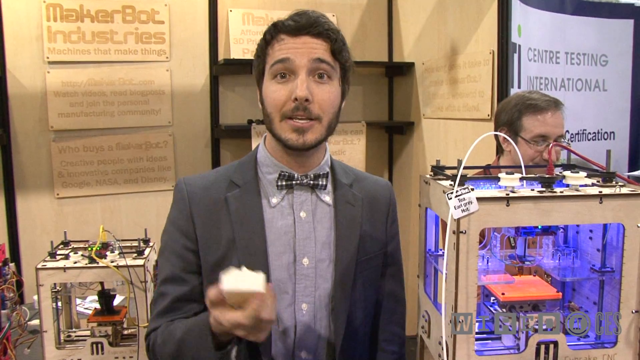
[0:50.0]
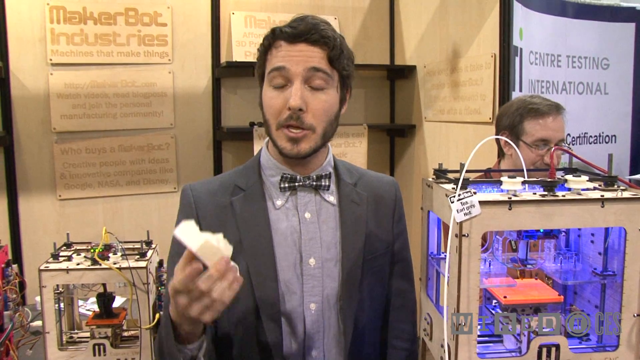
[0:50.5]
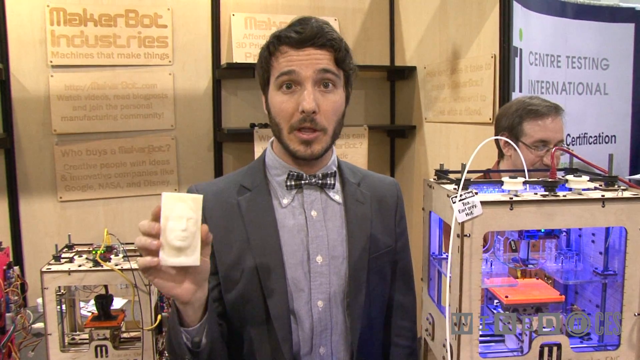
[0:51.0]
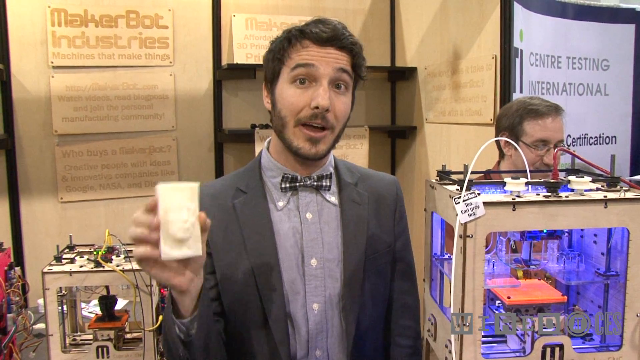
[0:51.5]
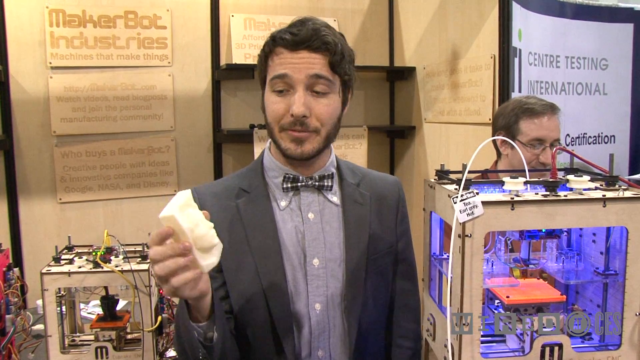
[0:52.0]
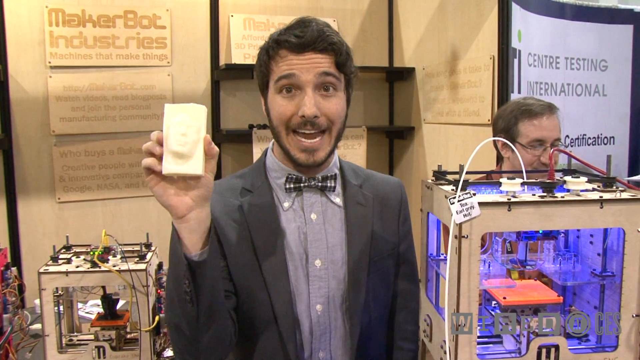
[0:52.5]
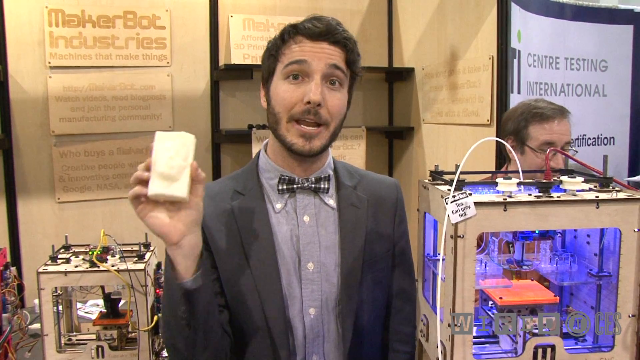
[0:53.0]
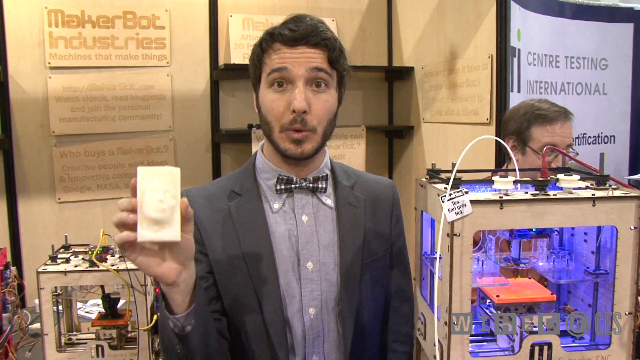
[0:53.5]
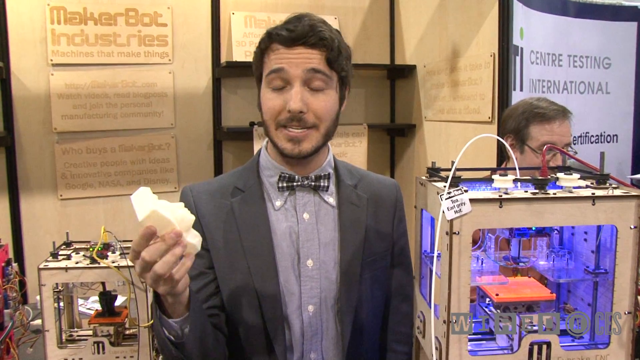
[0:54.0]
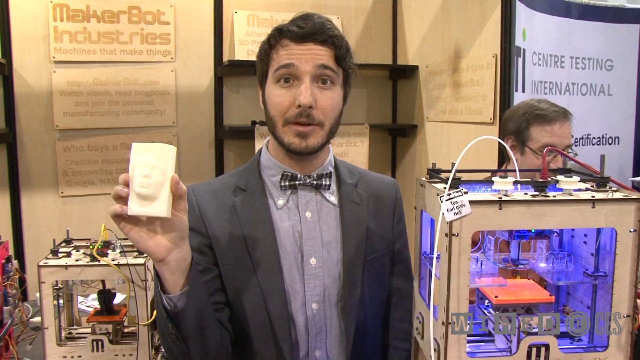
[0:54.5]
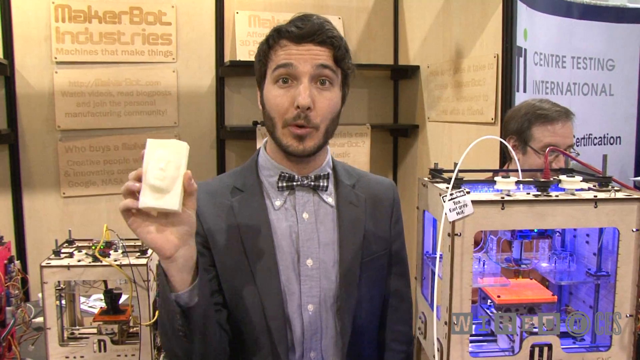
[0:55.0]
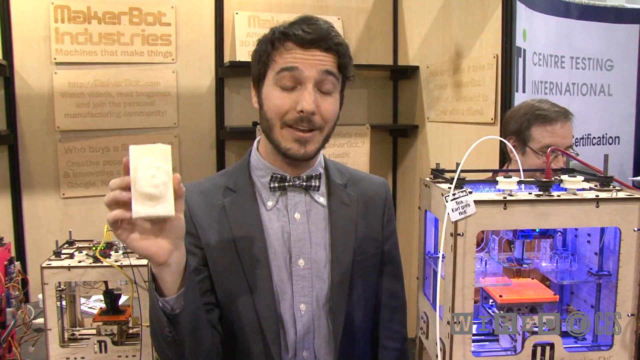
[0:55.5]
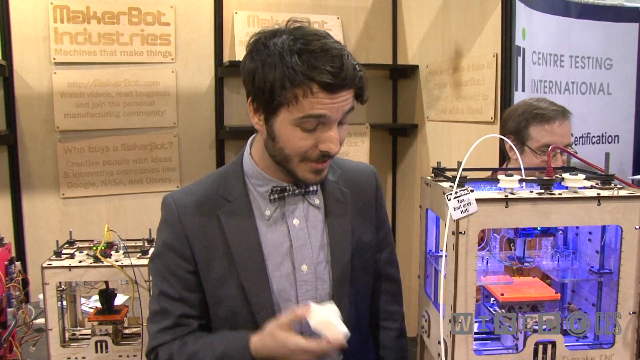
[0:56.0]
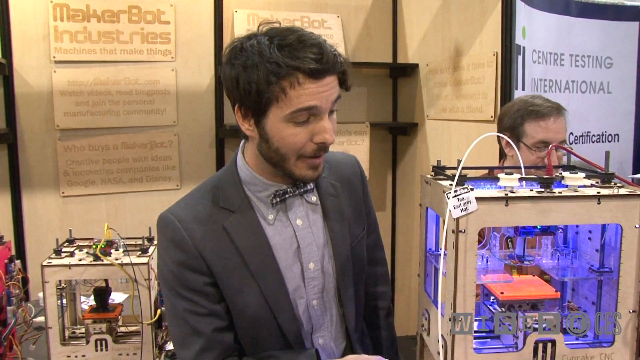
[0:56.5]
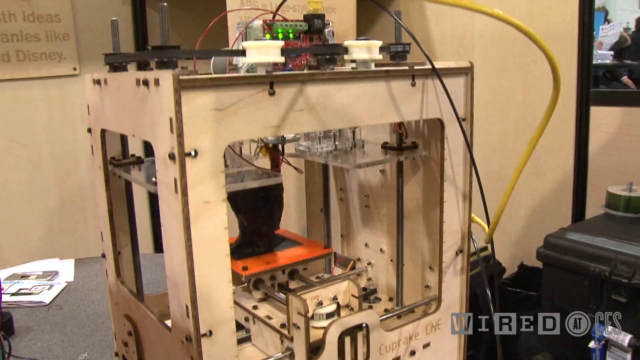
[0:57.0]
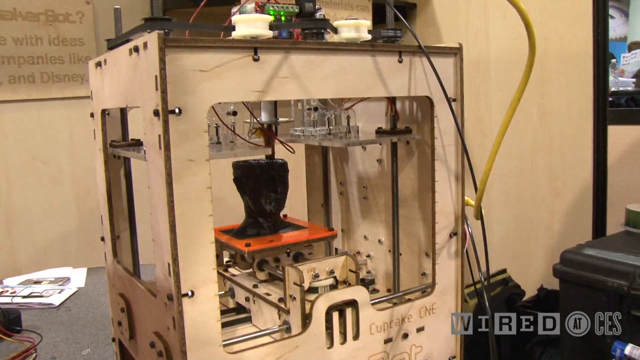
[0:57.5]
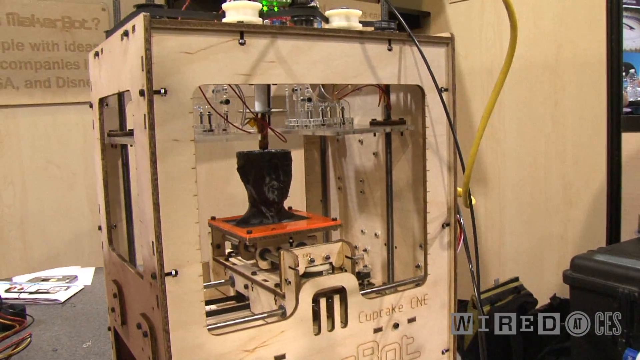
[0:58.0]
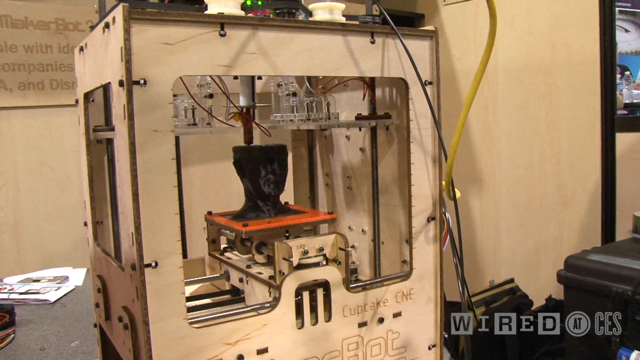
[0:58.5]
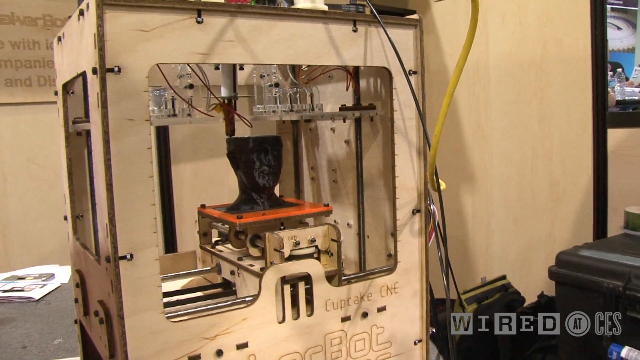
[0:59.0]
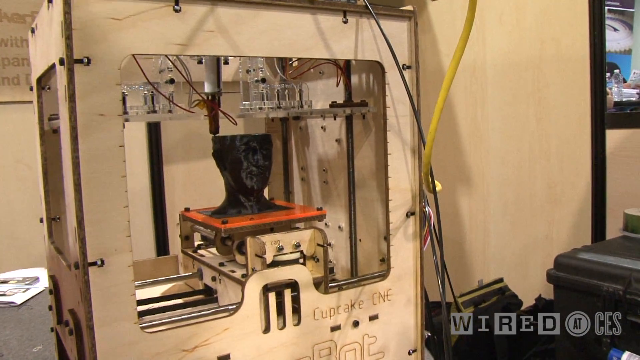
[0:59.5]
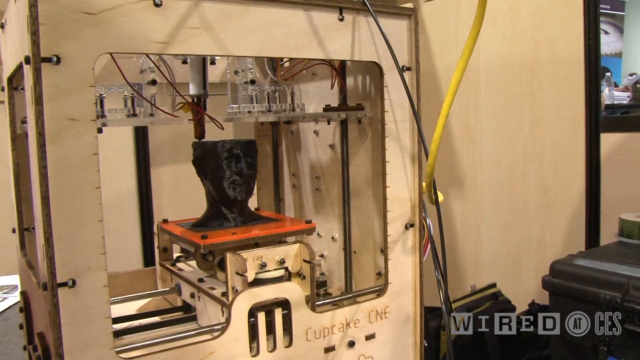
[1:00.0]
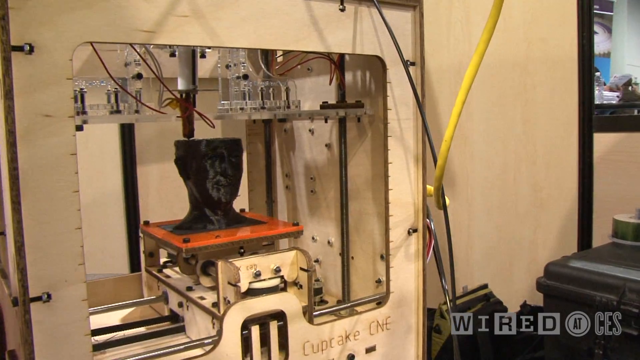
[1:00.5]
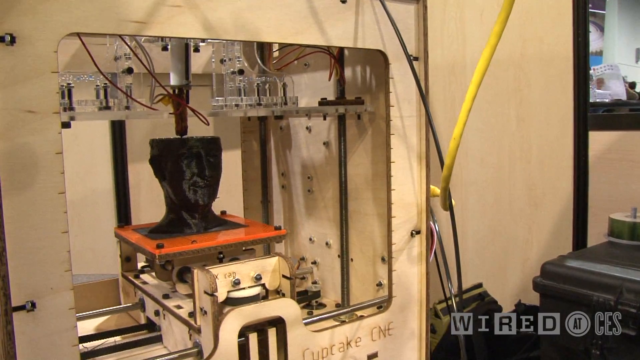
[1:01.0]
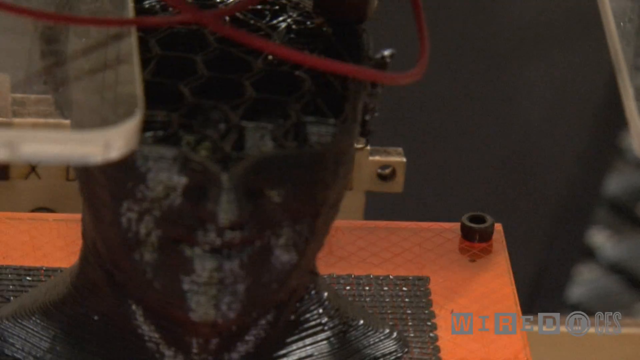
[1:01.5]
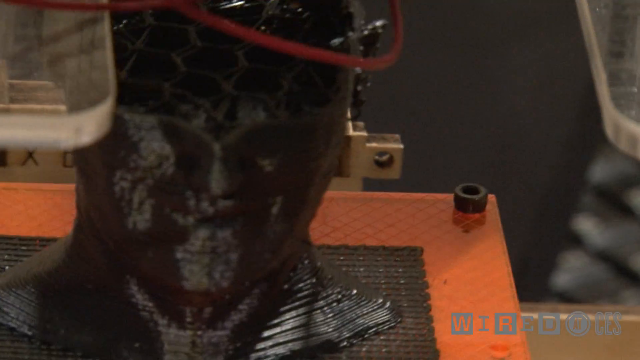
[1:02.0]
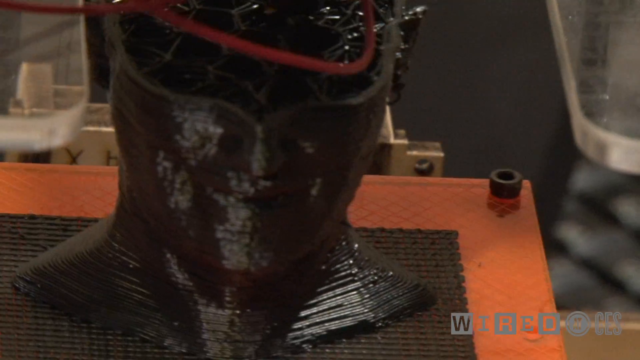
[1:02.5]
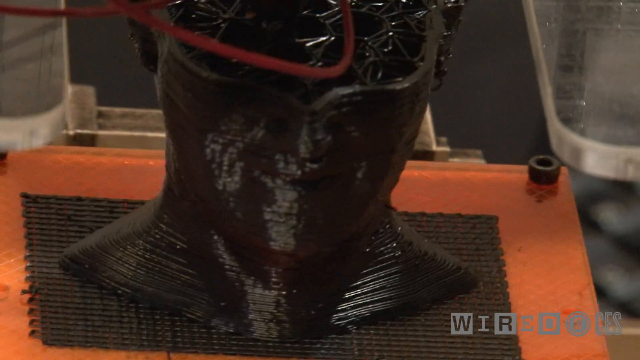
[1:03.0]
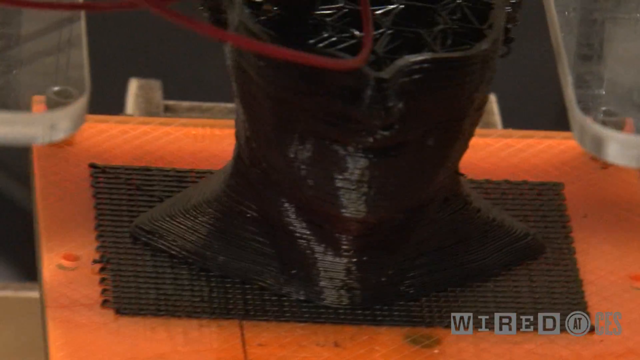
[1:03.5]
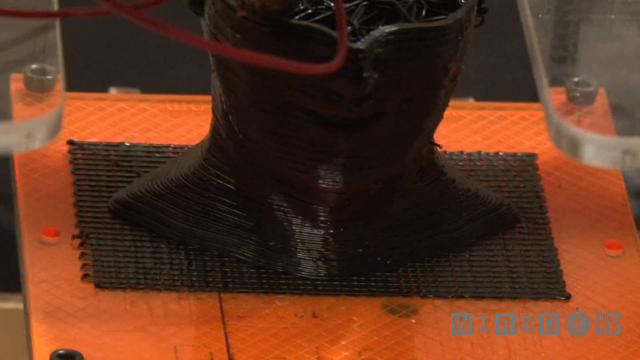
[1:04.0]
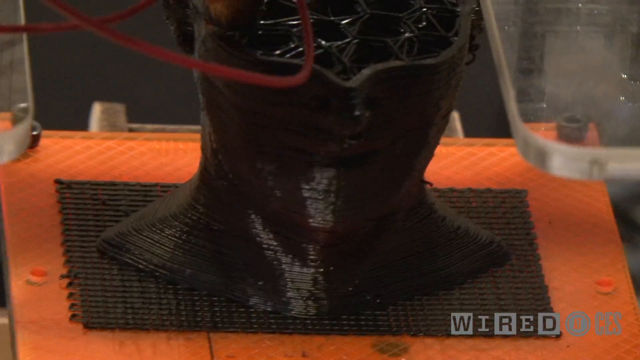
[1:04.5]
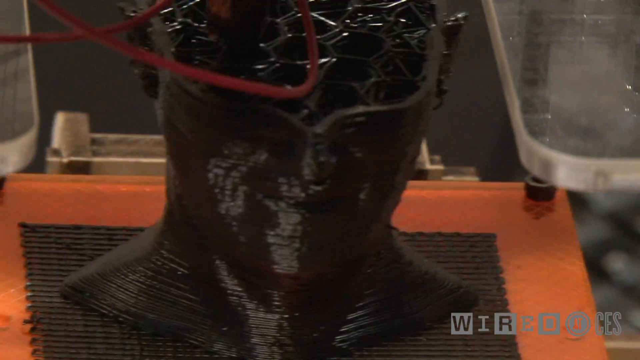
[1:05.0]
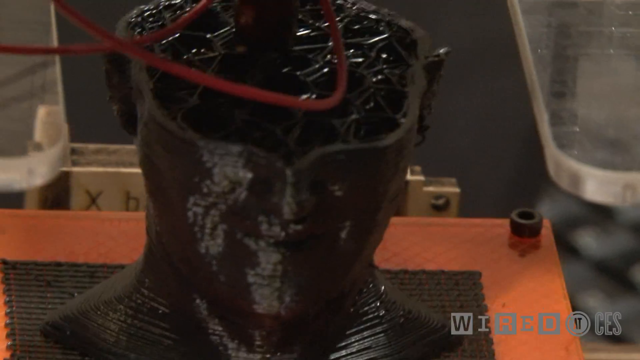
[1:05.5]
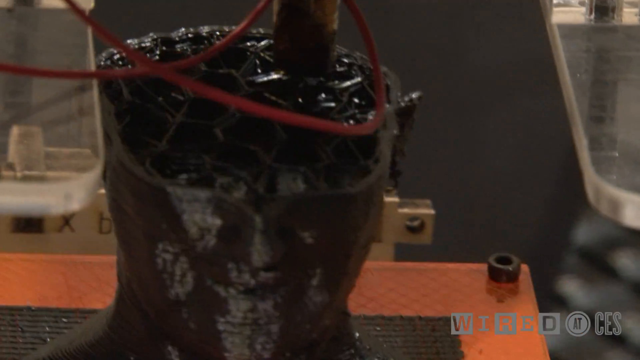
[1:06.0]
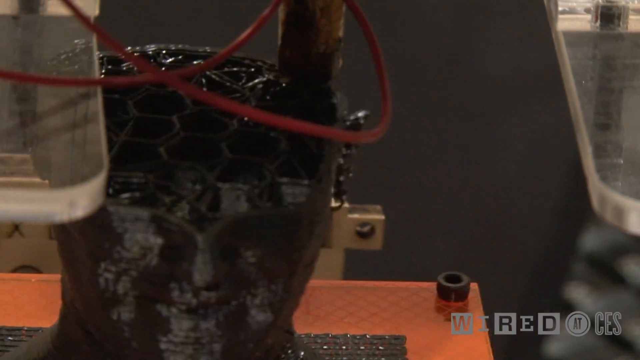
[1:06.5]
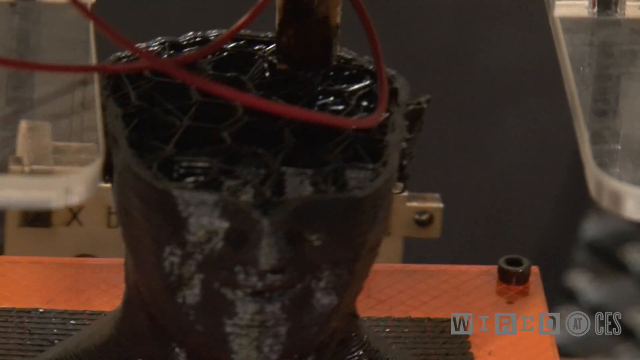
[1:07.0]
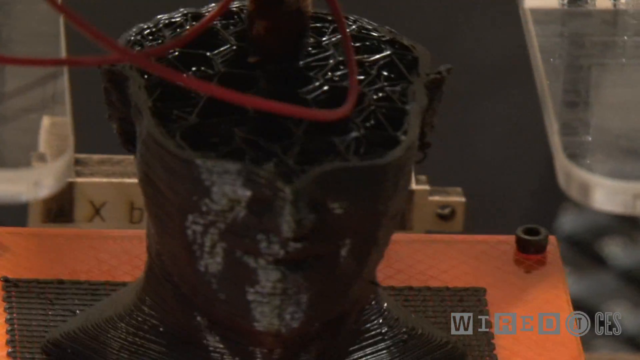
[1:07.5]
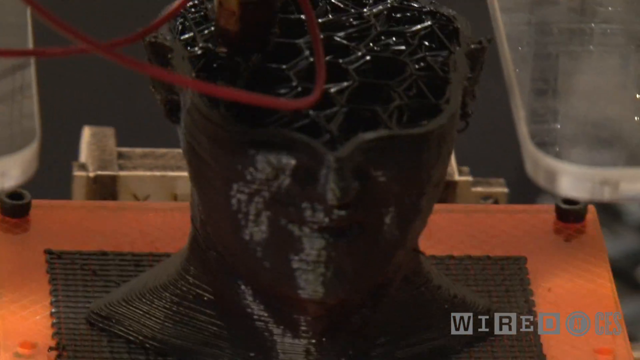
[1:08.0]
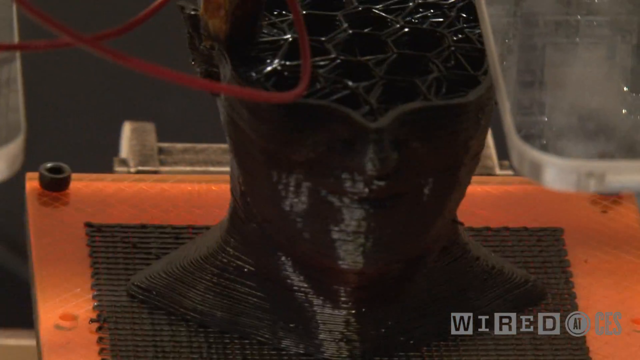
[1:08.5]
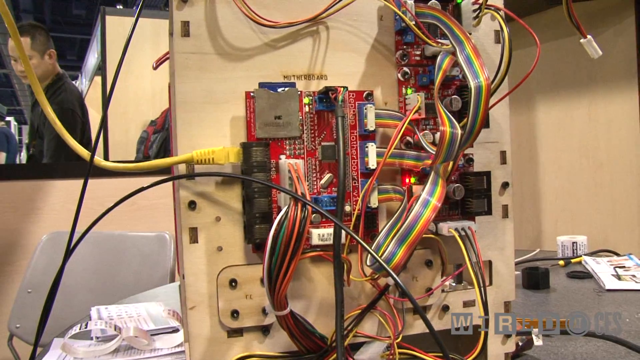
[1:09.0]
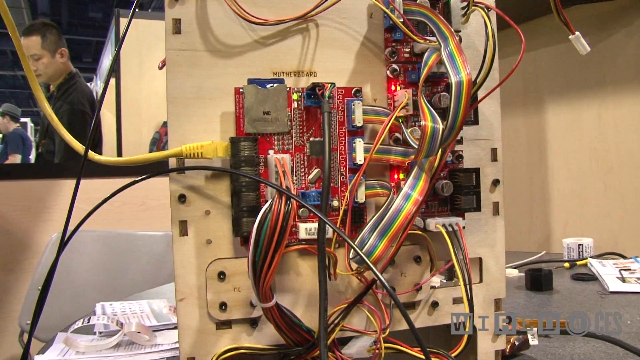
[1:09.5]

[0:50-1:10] The camera angle stays largely the same, with the main man pulling out one item at a time. The most recent one looks almost like a bar of soap with some kind of ridge on it; the items are fairly basic. He keeps holding each up and putting it back. The camera then shifts and zooms much closer into the 3D printer as it makes the items, showing many wires and strings. It is a small box with a cylindrical metal part, probably holding ink or some rubber-like material, pointing downwards and forming shapes. A bust of a head is being created.